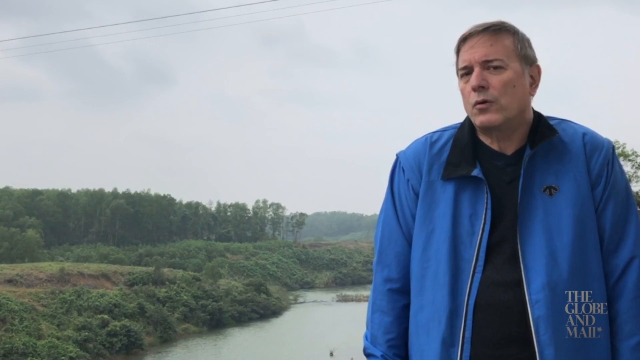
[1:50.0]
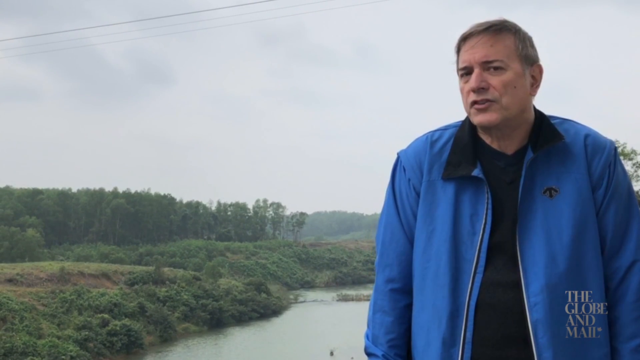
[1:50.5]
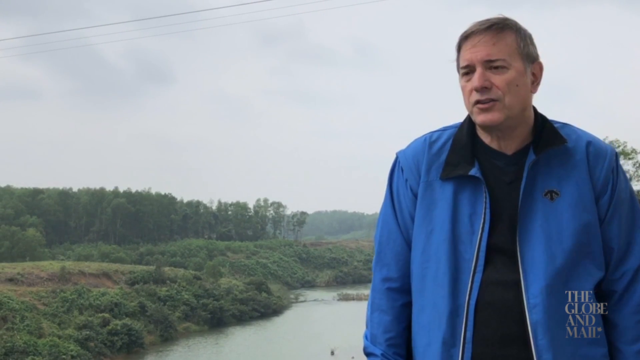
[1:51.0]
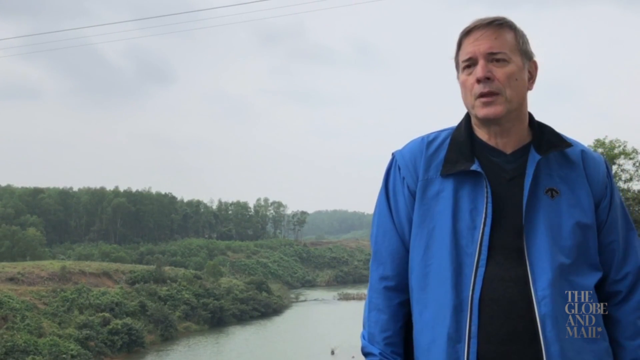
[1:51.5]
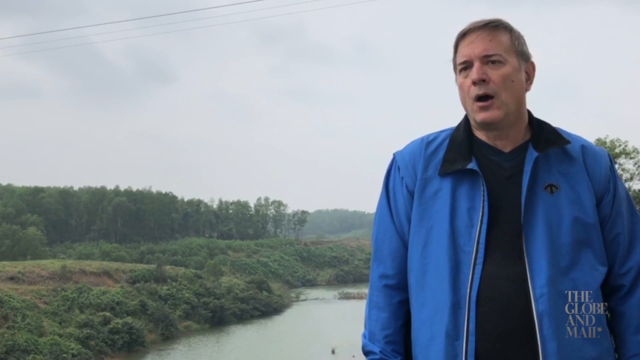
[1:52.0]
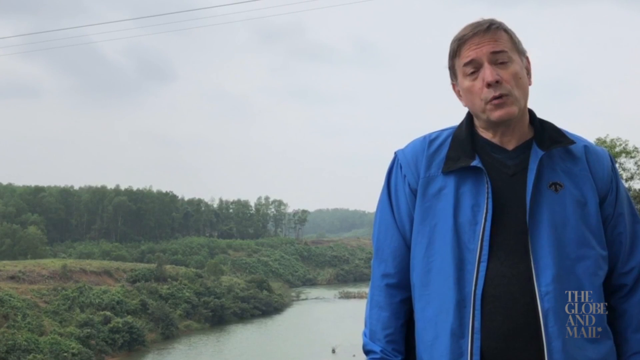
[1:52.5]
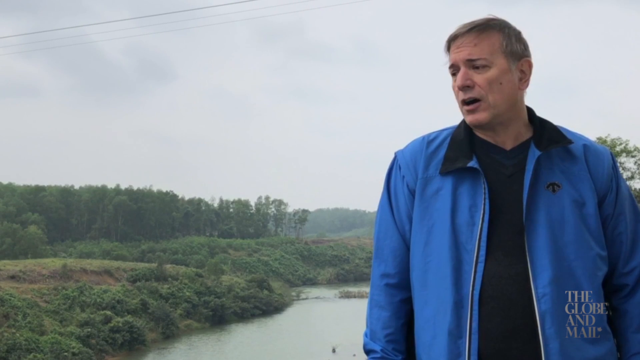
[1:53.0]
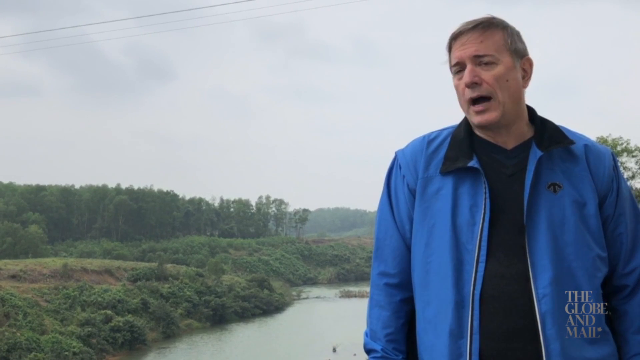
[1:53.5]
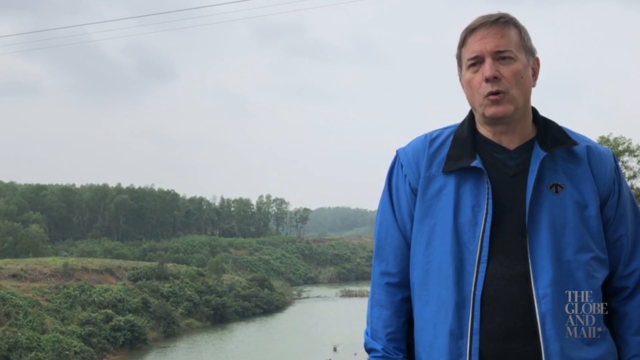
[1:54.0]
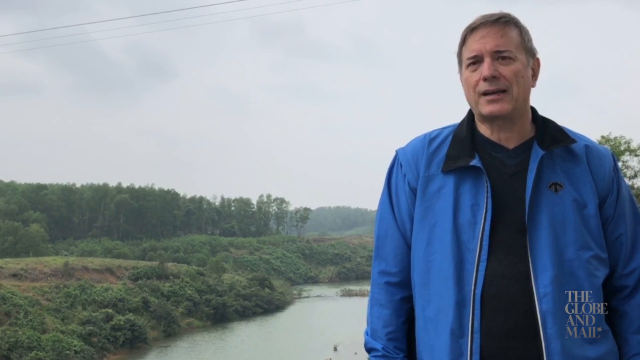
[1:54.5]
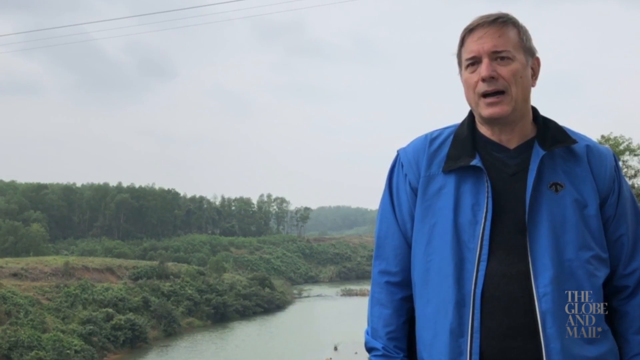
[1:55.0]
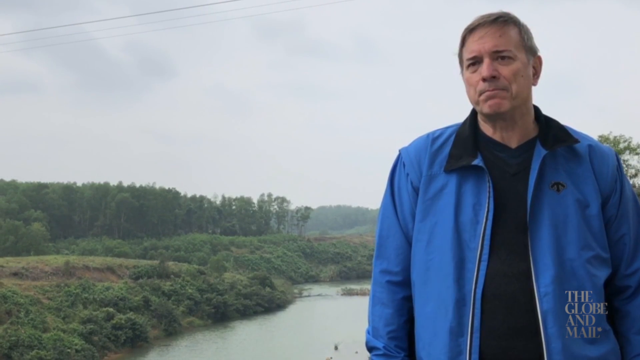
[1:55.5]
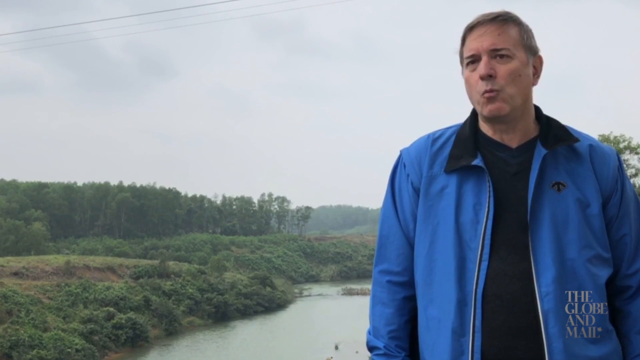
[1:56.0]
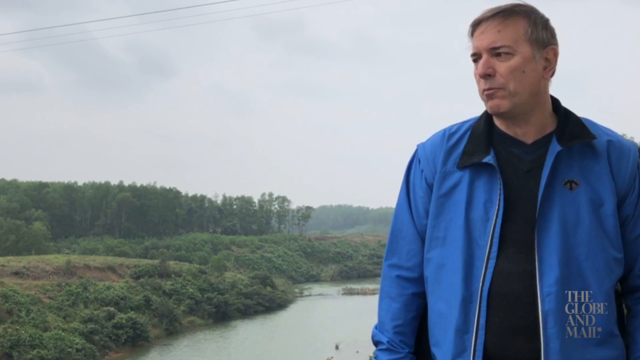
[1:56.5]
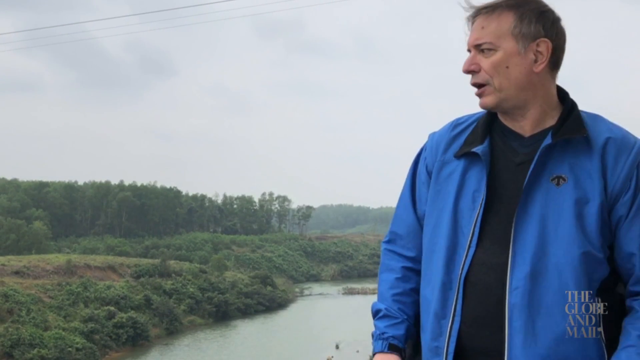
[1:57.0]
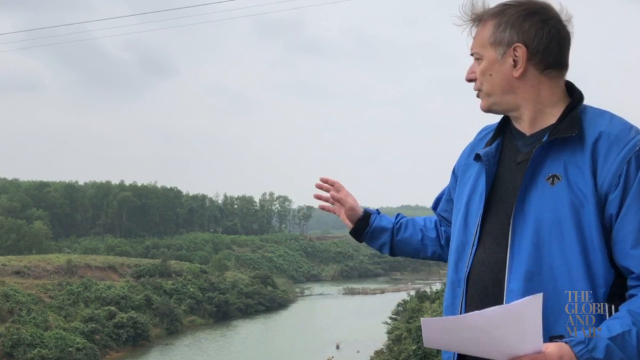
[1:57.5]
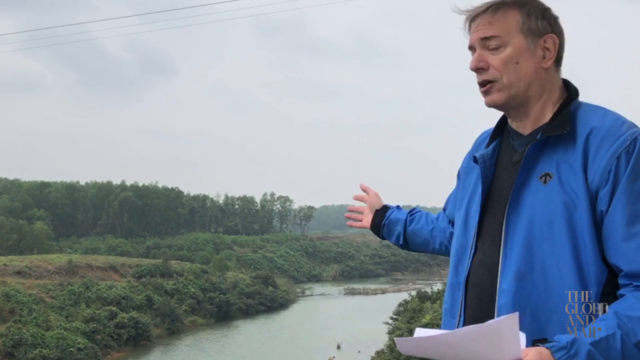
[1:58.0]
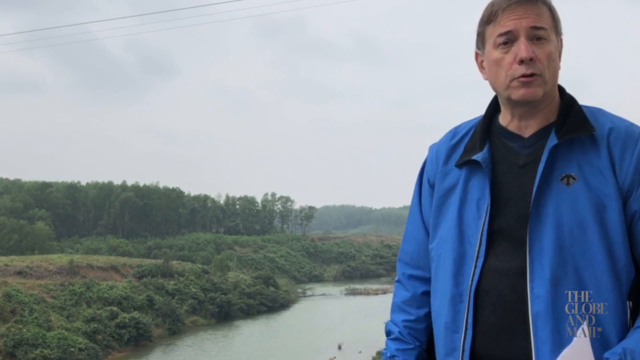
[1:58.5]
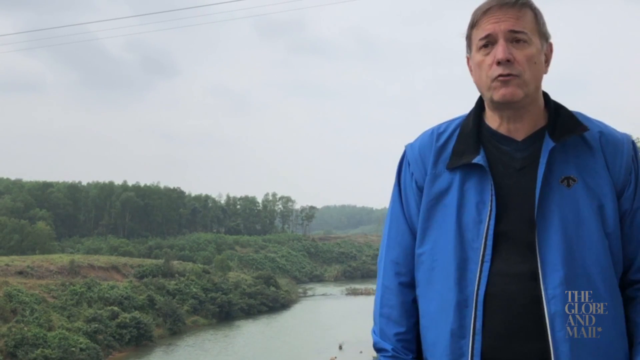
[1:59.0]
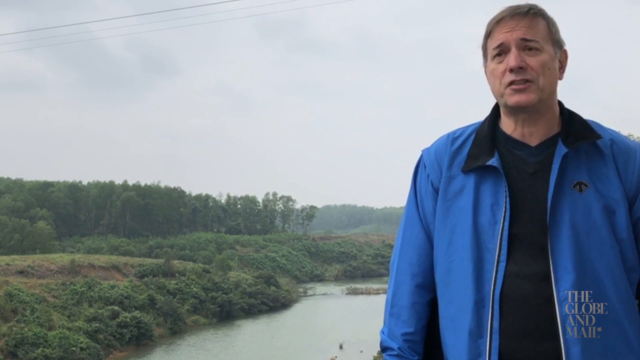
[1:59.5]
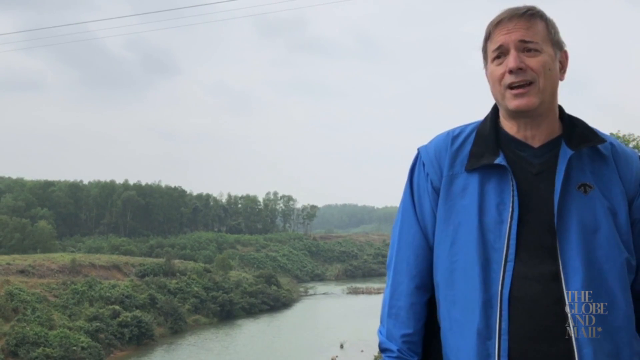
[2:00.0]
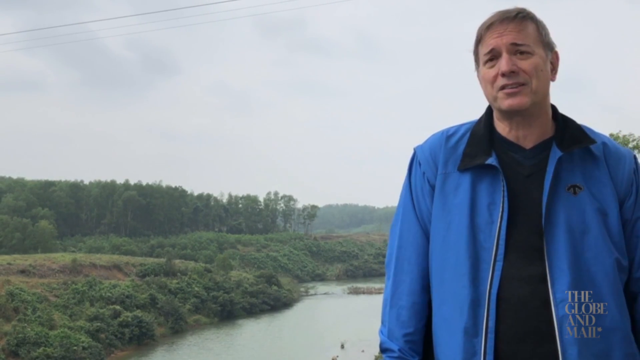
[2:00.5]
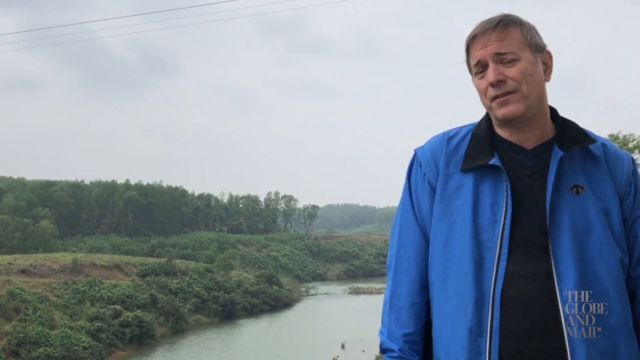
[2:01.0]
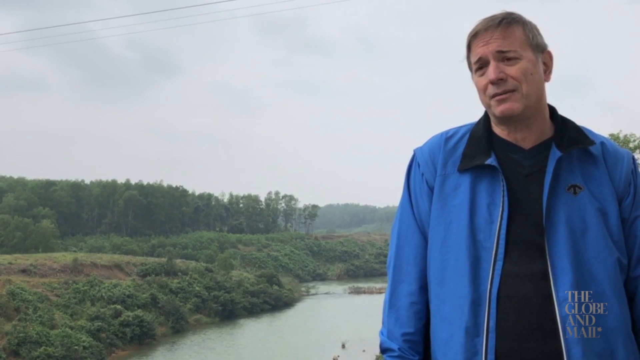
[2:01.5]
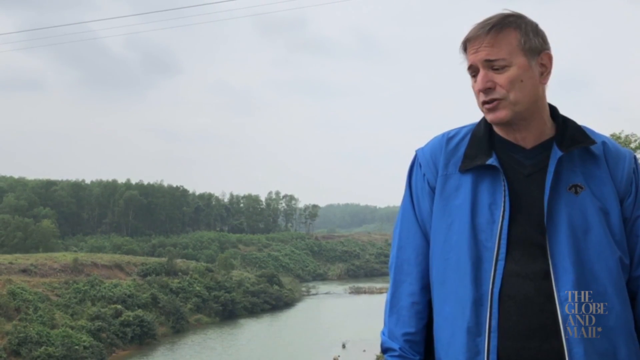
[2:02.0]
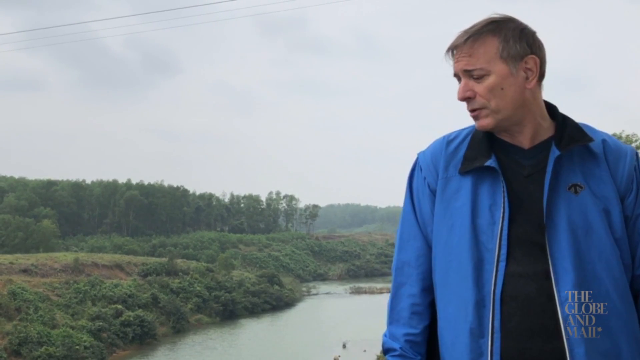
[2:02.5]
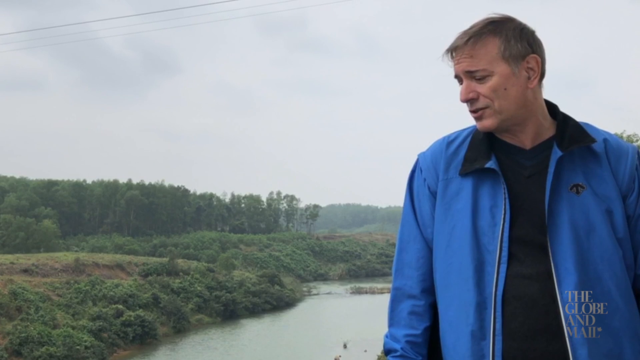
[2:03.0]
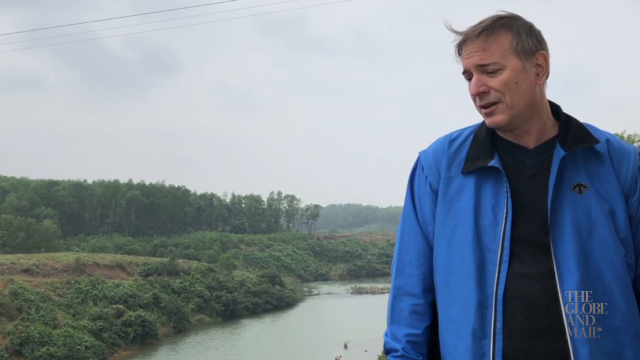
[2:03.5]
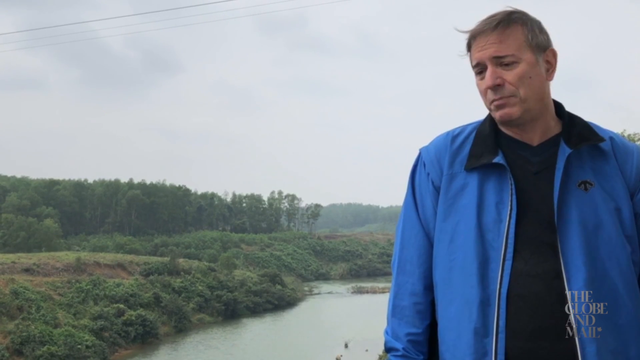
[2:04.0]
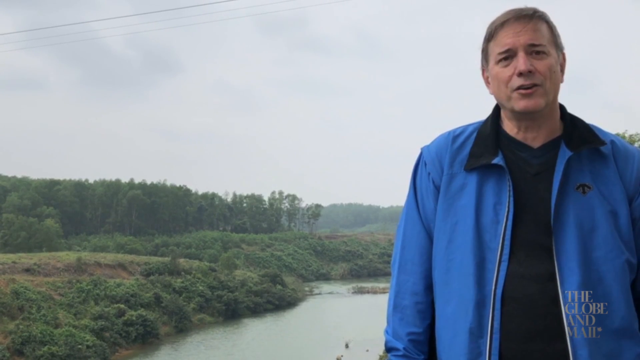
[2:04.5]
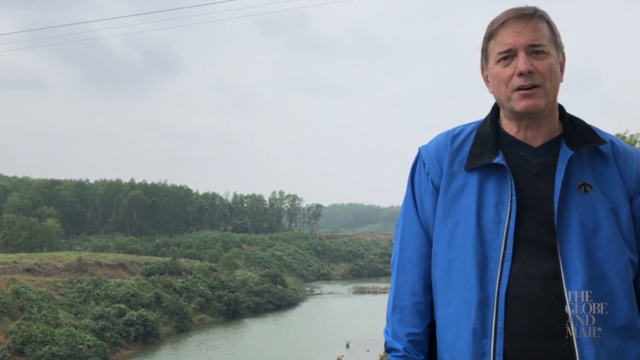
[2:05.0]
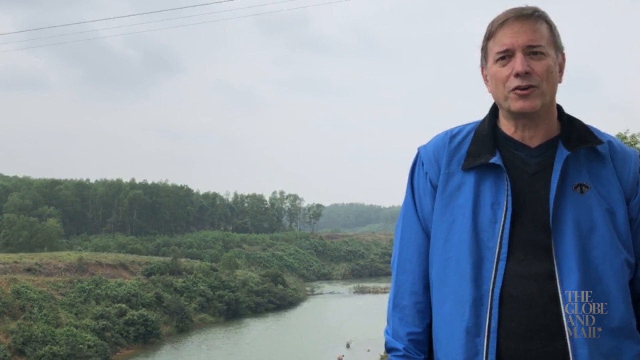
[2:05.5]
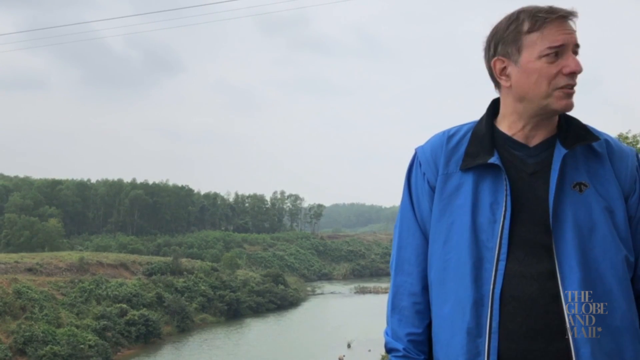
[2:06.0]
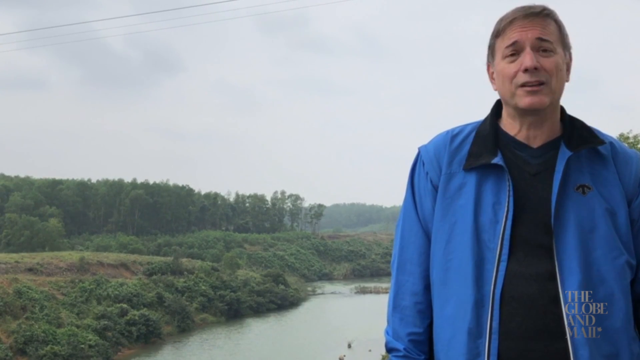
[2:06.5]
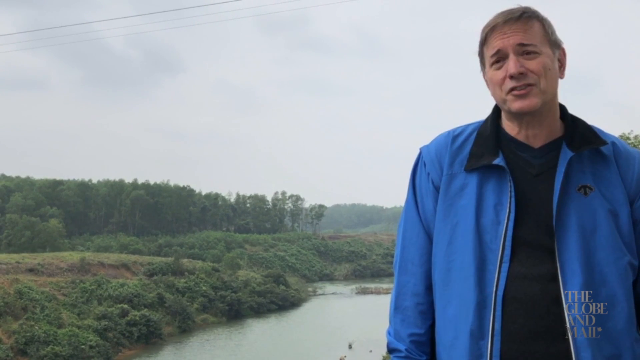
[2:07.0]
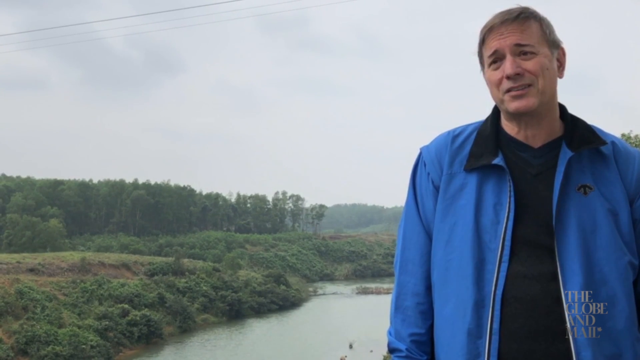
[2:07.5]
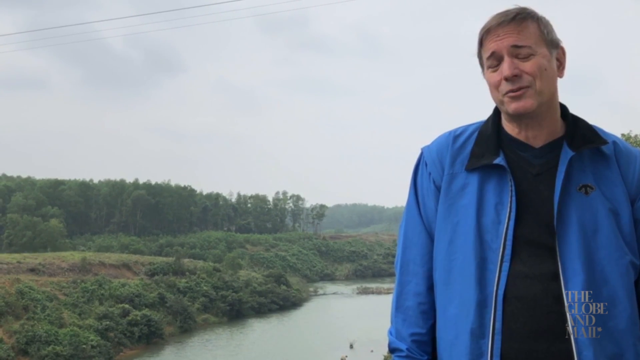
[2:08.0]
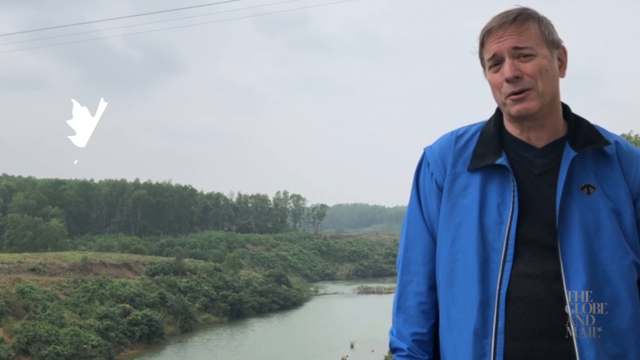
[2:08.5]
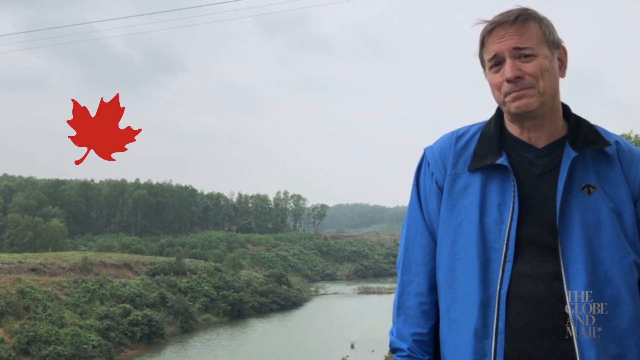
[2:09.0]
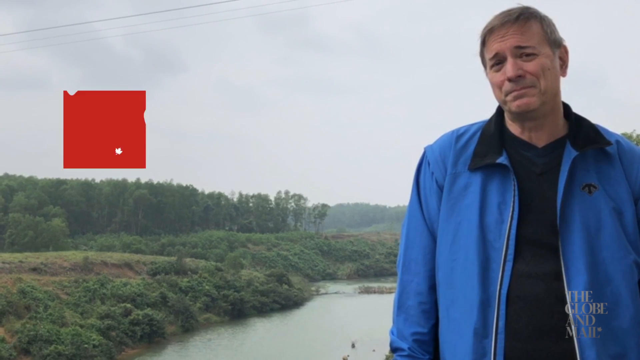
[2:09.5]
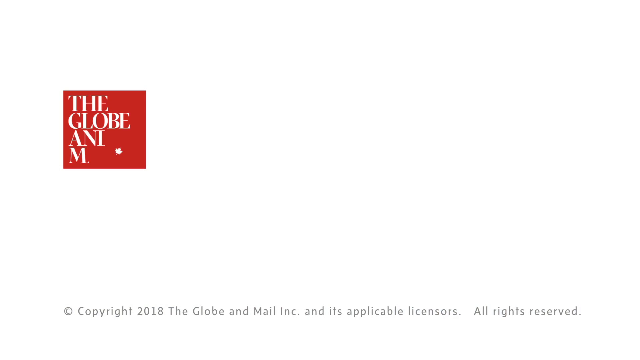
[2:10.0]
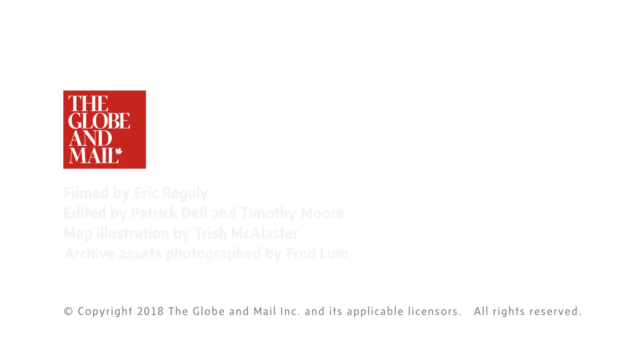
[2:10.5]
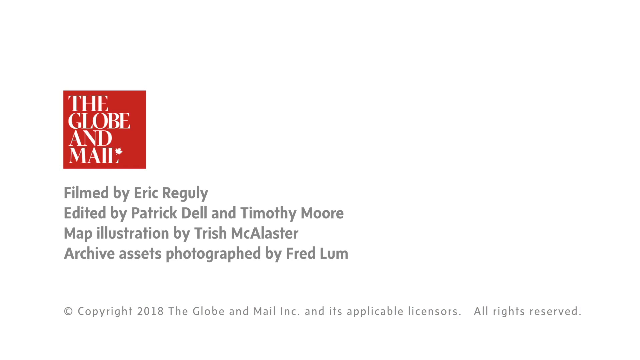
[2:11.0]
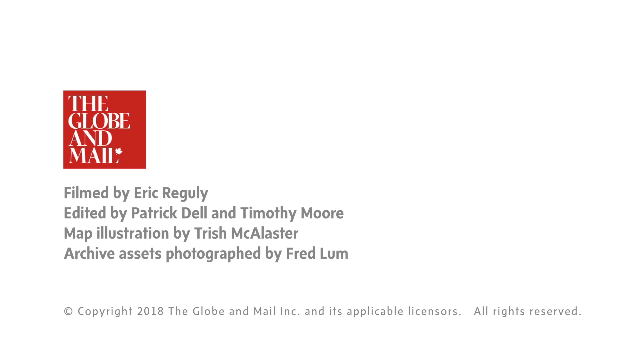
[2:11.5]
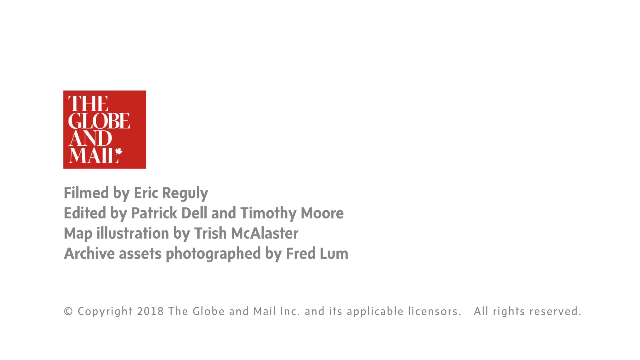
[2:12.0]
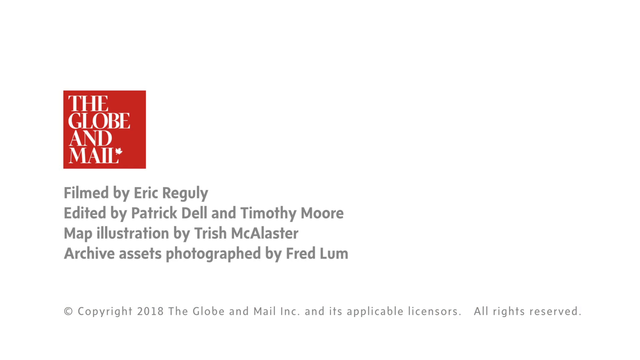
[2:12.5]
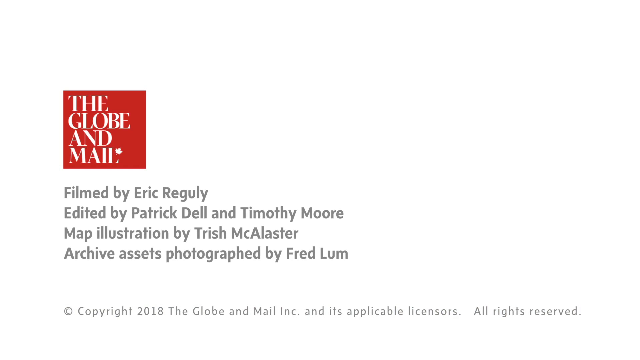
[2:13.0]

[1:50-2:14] The man continues to talk, raising his shoulders slightly up and down and moving his head from side to side. He shakes his head slightly as he turns, lifts his right hand slightly and gestures in the background, and glances back down the river for a moment before looking back towards the camera. He appears to be slightly leaning against something on his right. He glances his head down towards his right, briefly looks to his left, and then looks directly at the camera again. As he stops speaking, a red maple leaf logo appears on the screen. On a white screen, the maple leaf turns into the Globe and Mail logo in a red square. Underneath, grey text reads "Filmed by Eric Reguli, Edited by Patrick Dell and Timothy Moore, Map illustration by Trish McAllister, Archive assets photographed by Fred Lum". Small text at the very bottom of the screen reads "copyright 2018 the Globe and Mail Inc and its applicable licences, all rights reserved".